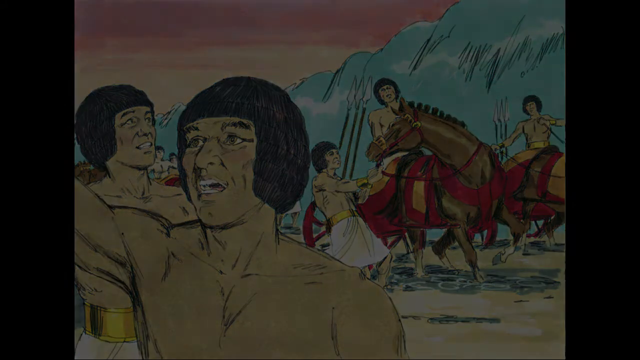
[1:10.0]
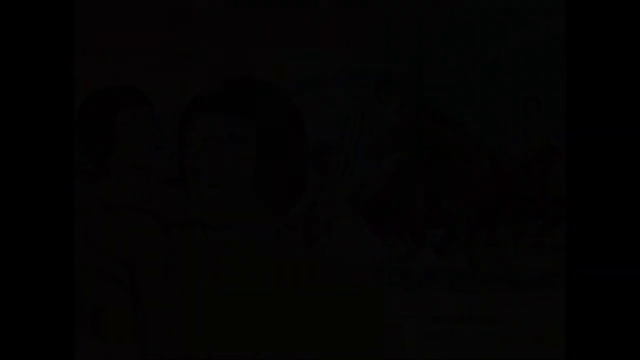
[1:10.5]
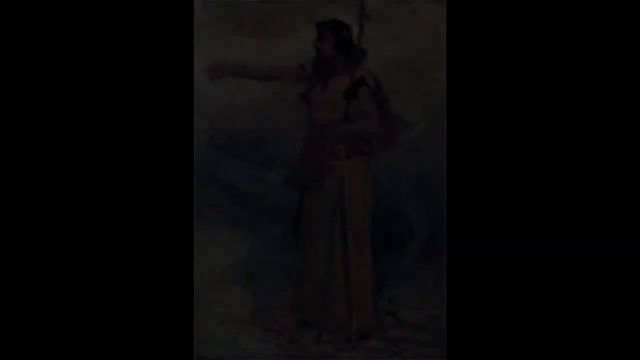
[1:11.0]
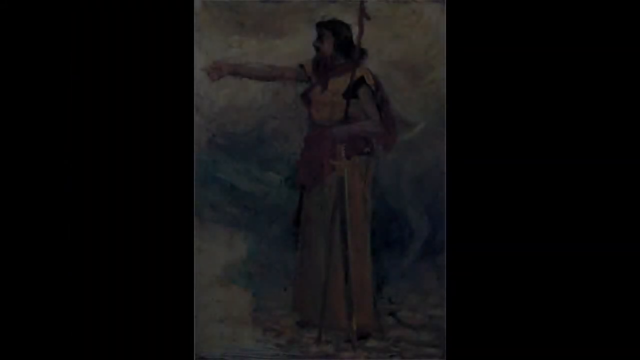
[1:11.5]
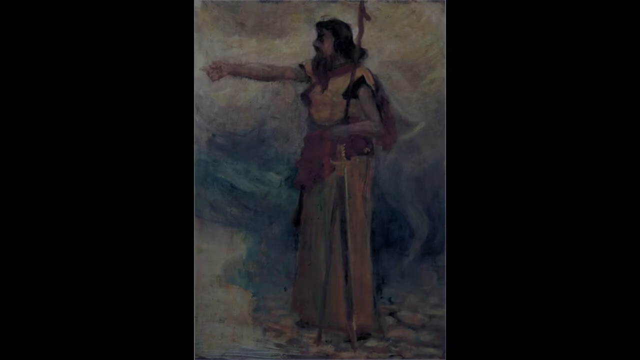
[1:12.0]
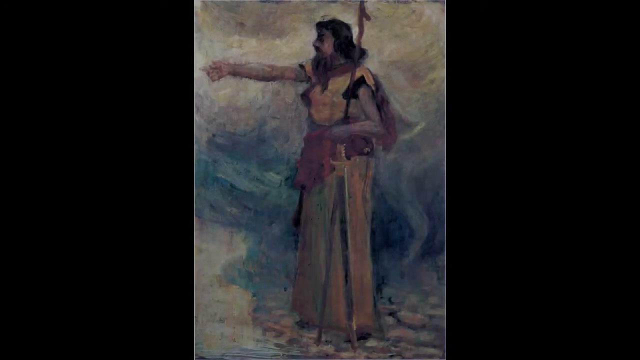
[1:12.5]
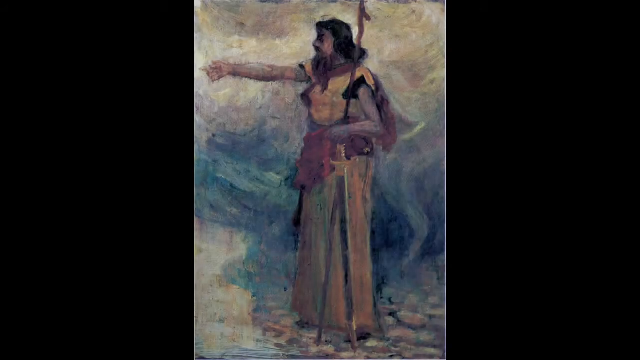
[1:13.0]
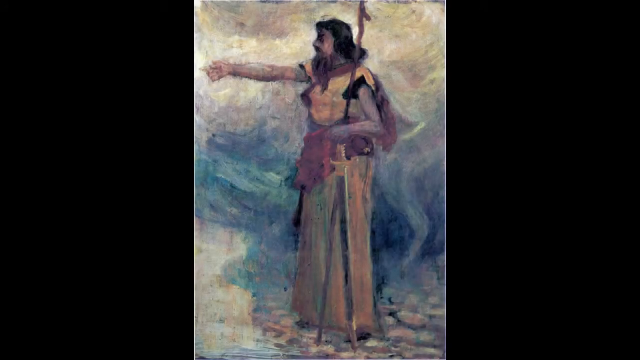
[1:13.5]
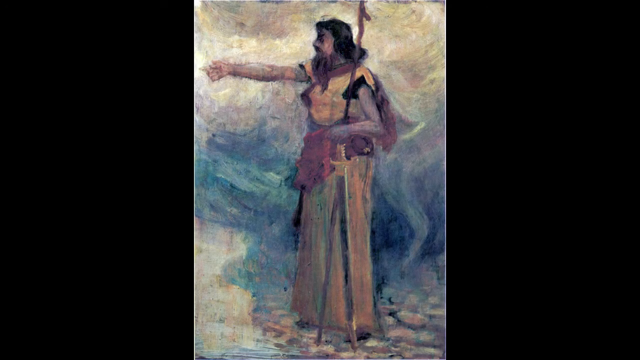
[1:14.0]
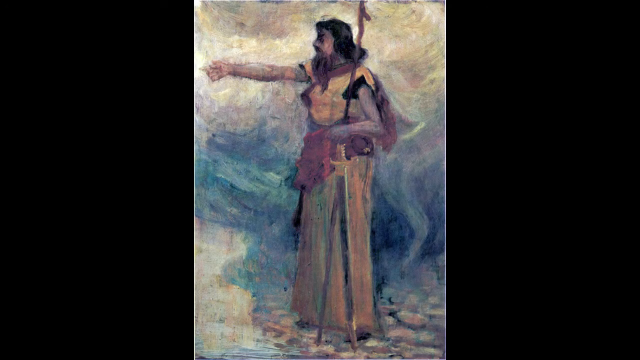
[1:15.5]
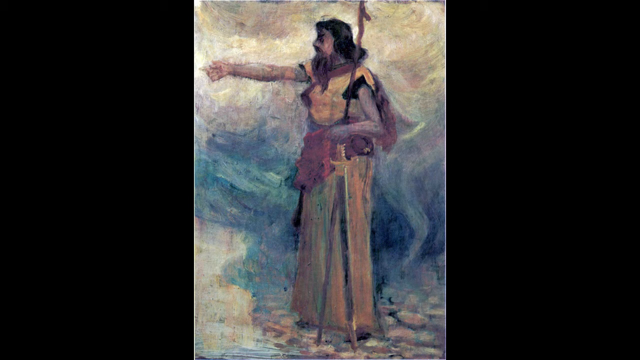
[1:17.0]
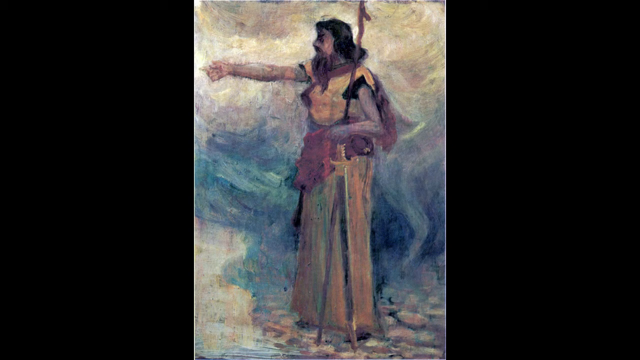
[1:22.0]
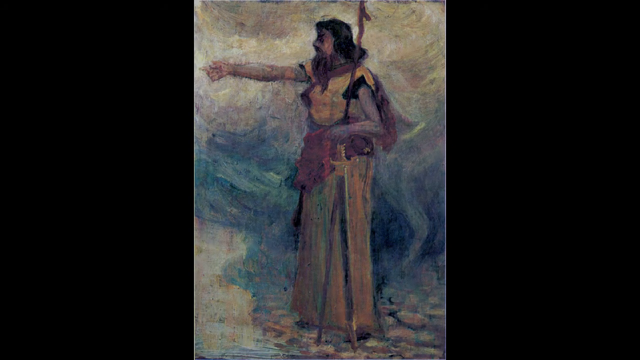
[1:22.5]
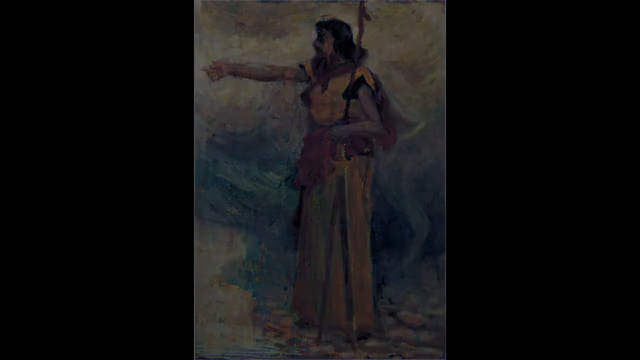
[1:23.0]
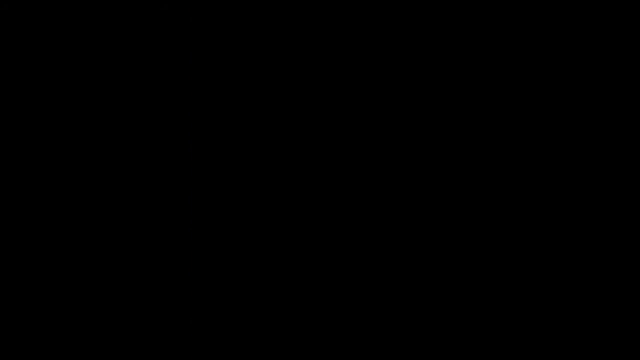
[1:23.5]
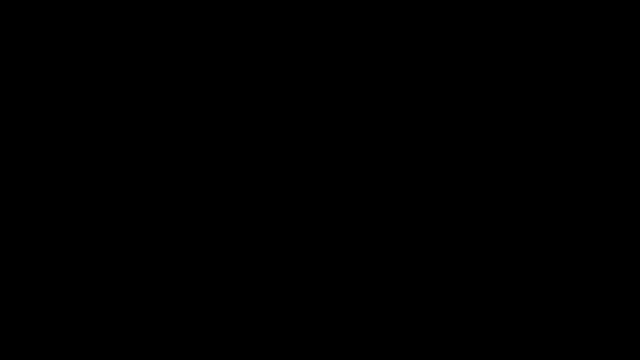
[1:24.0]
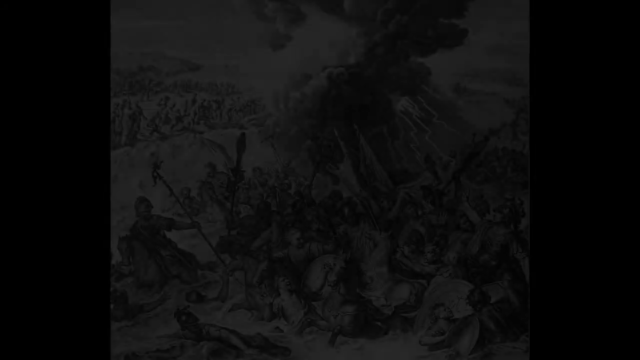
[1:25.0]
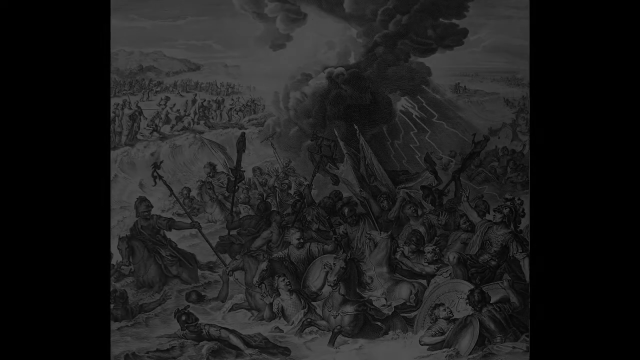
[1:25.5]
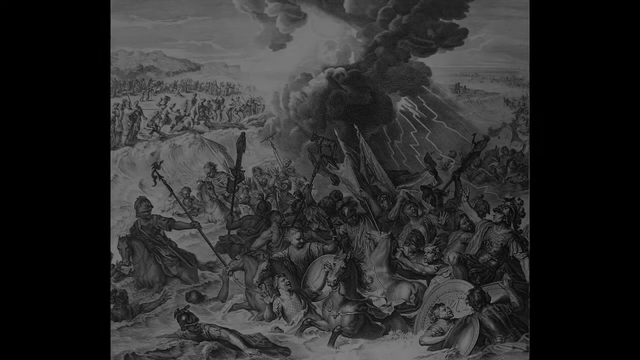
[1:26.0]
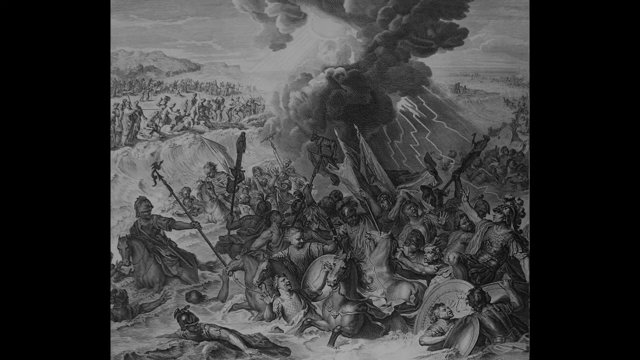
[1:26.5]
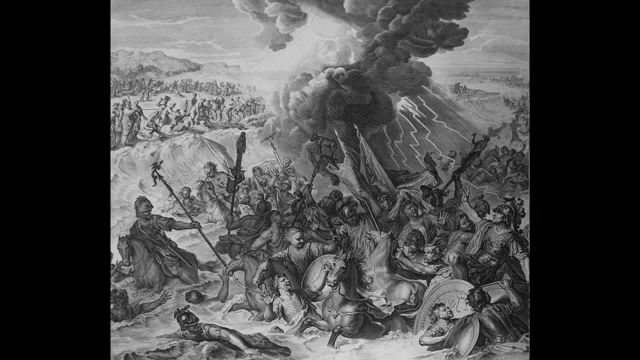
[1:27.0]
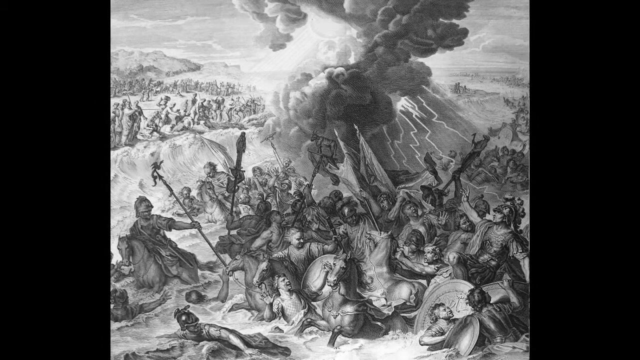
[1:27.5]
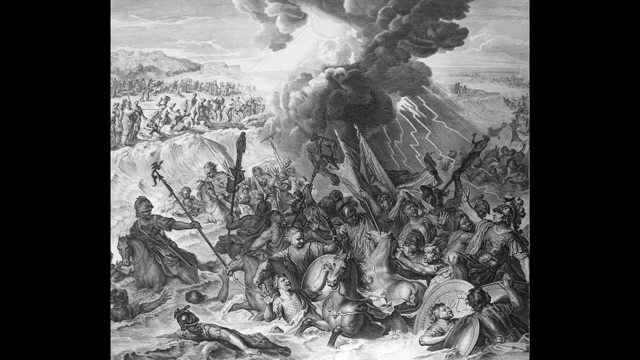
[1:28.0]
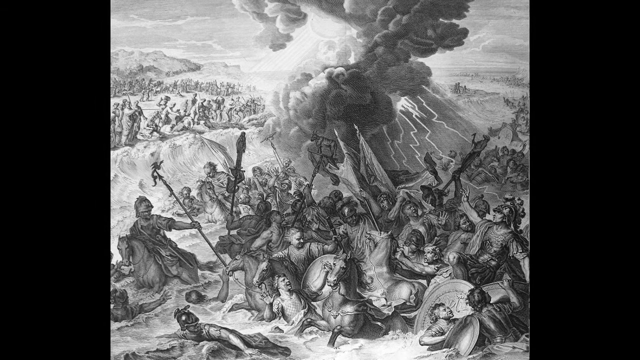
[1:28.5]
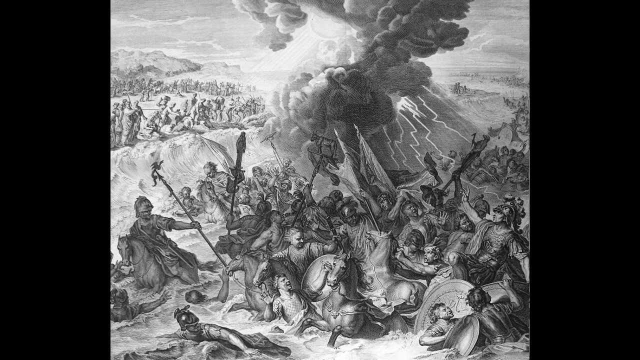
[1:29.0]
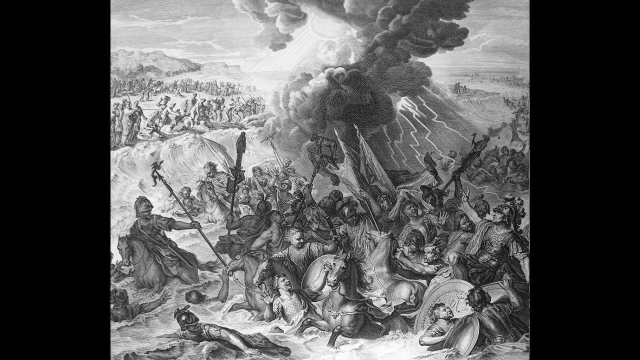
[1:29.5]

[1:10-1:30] The pictures show an ancient man holding many things in his hand, in what seems to be a war zone. There are many fires, and many people are suffering and attacking each other, with many very old-looking firearms; the pictures possibly date from 1917 or earlier.